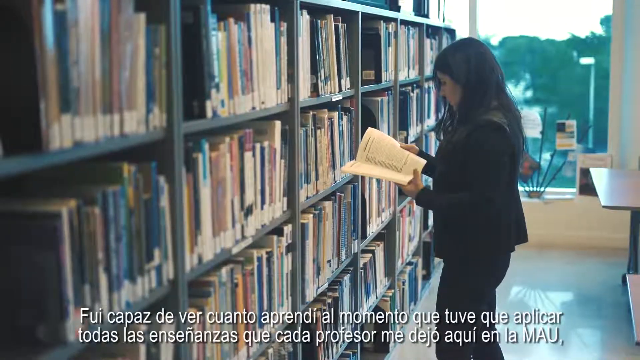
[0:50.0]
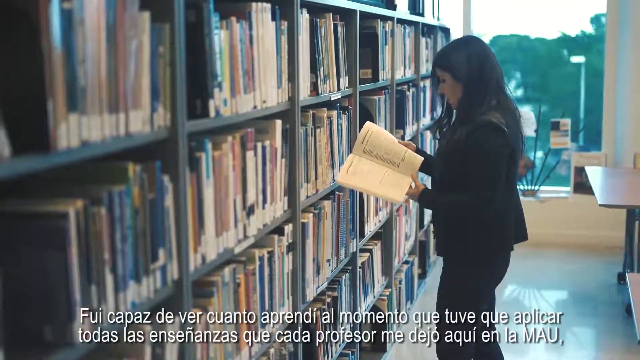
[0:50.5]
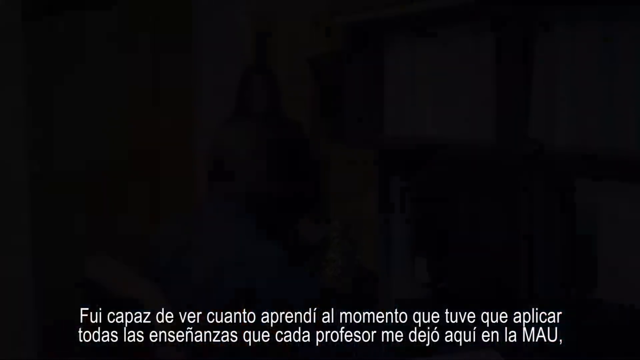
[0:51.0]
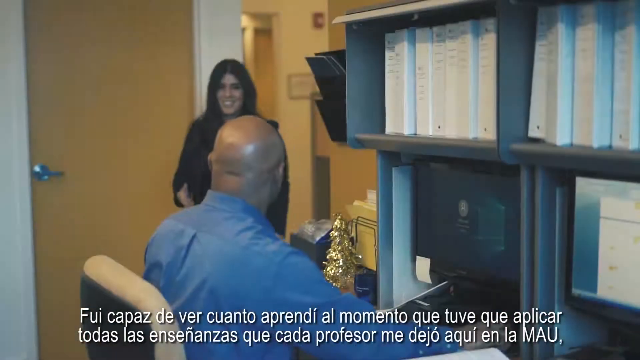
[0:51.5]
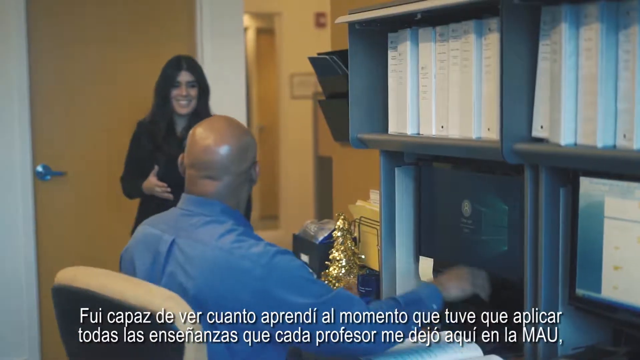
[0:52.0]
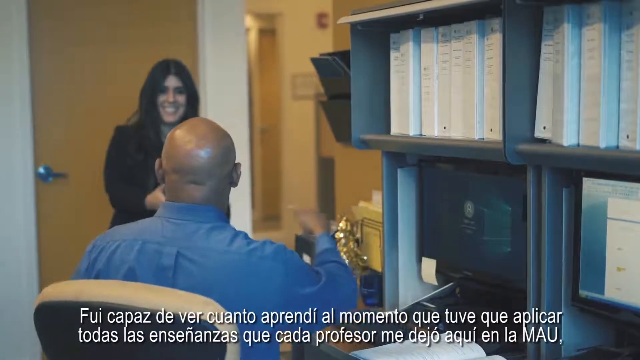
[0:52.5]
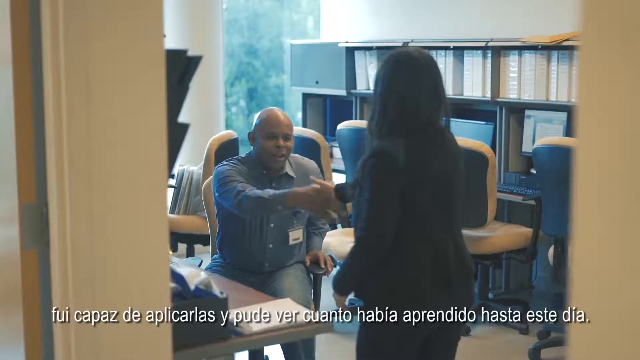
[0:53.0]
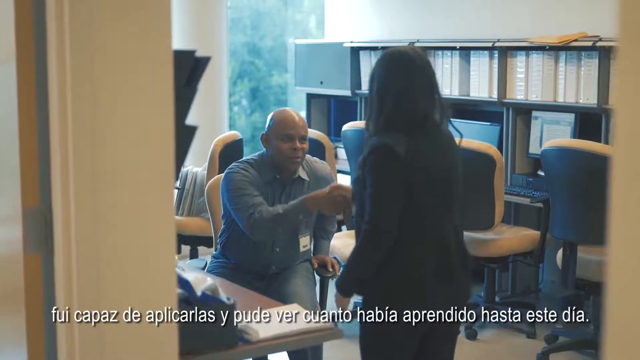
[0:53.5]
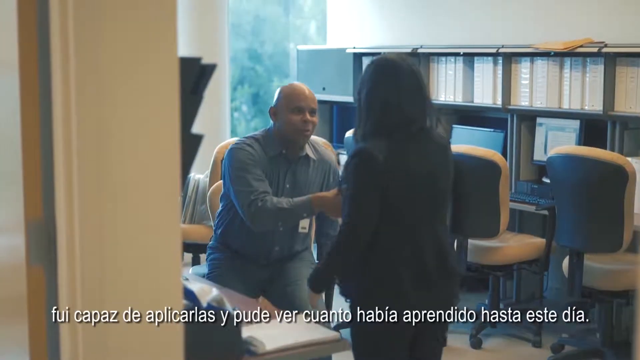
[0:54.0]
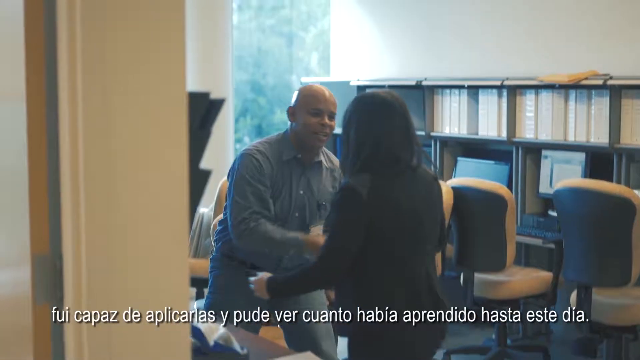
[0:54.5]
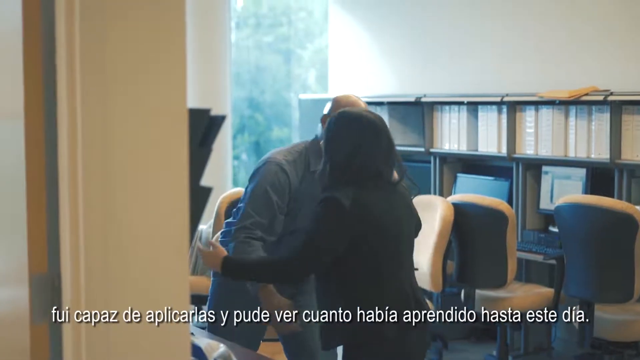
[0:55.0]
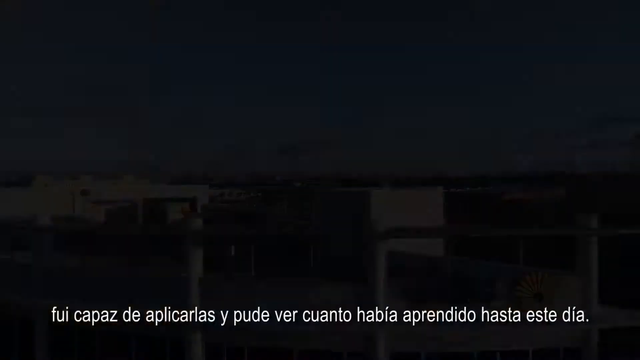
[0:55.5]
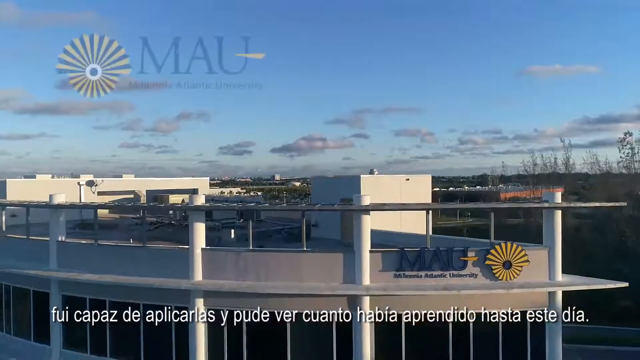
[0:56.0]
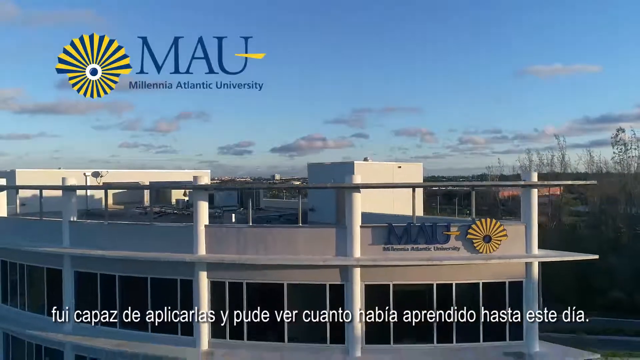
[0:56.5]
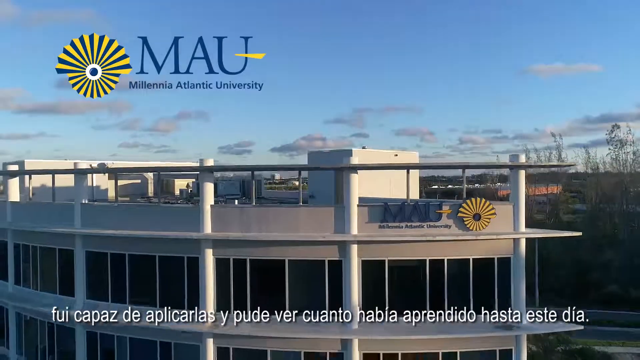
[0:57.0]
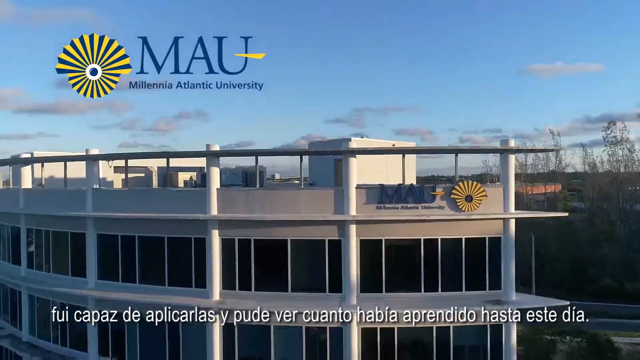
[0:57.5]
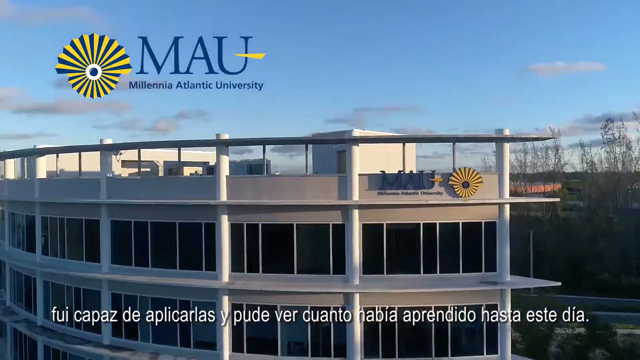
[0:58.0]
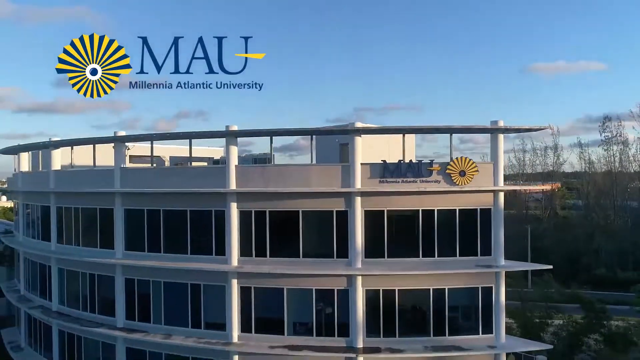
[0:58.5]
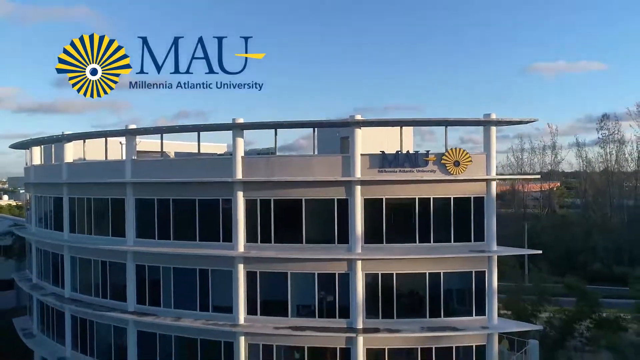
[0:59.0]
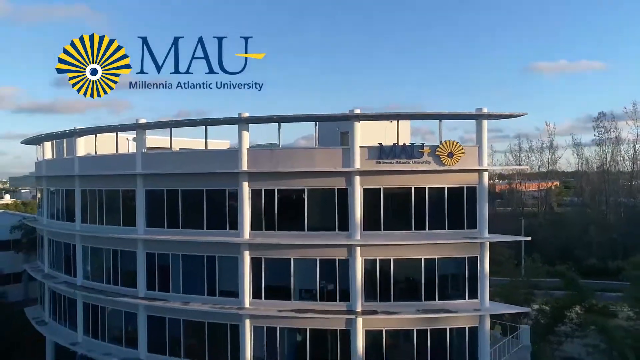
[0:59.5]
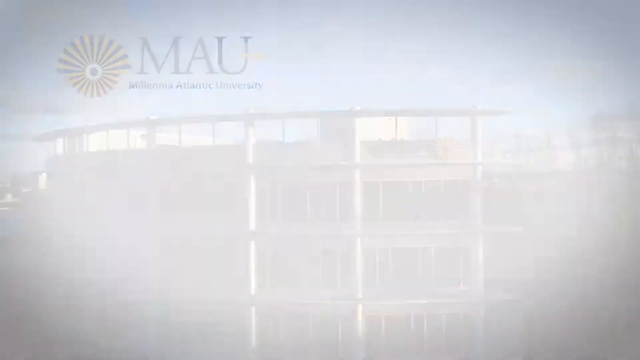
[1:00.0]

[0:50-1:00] The woman is reading the book in the book area, and then she goes straight to the office of another man. When she arrives, they greet each other and shake hands. The office appears to be the man's office, and there are other chairs in it. After the greeting, the outside of the university is shown, apparently Millennia Graduate University, a very big building.